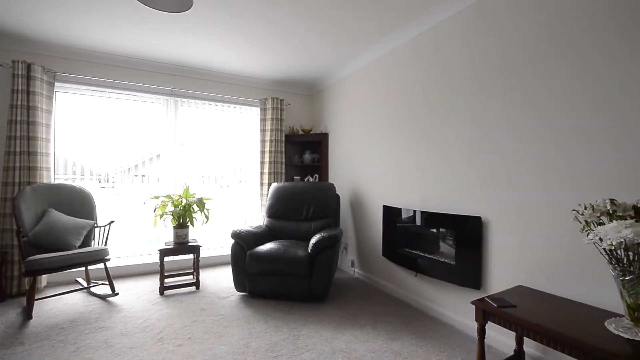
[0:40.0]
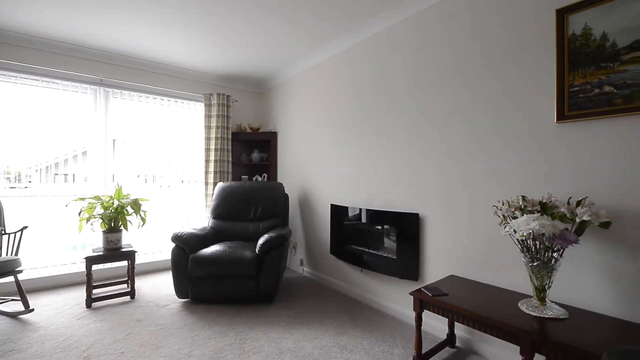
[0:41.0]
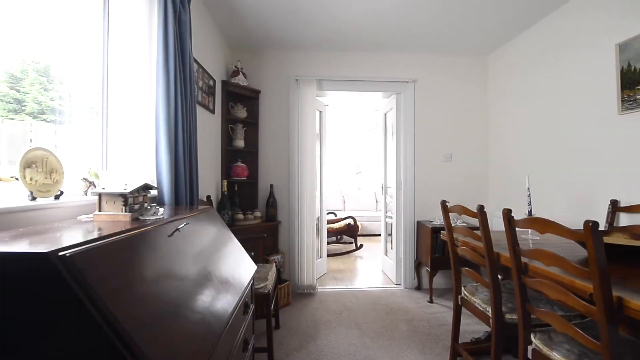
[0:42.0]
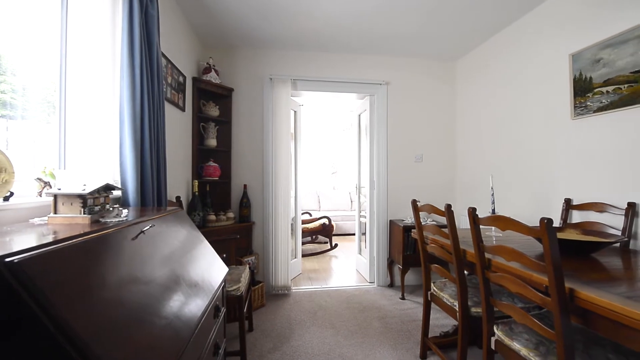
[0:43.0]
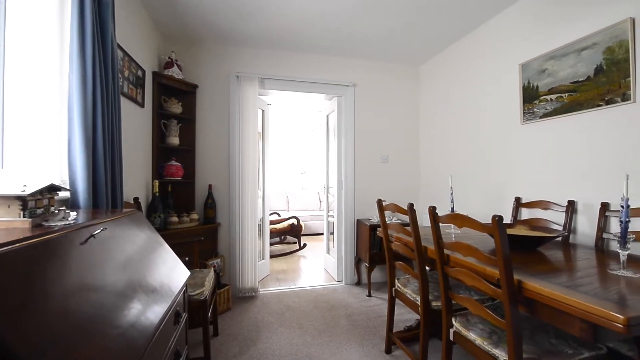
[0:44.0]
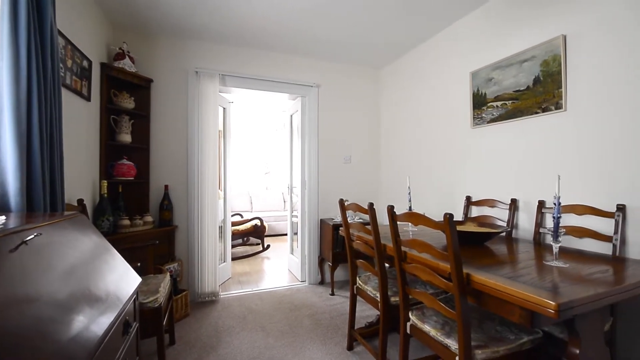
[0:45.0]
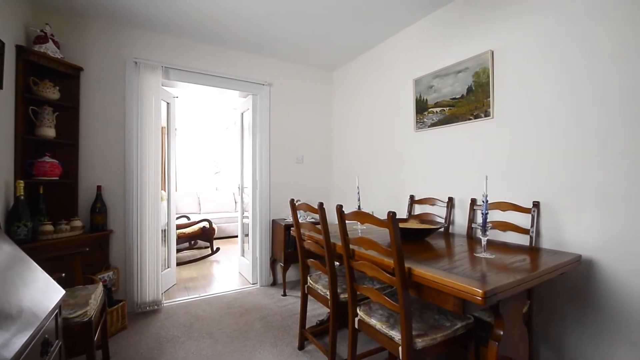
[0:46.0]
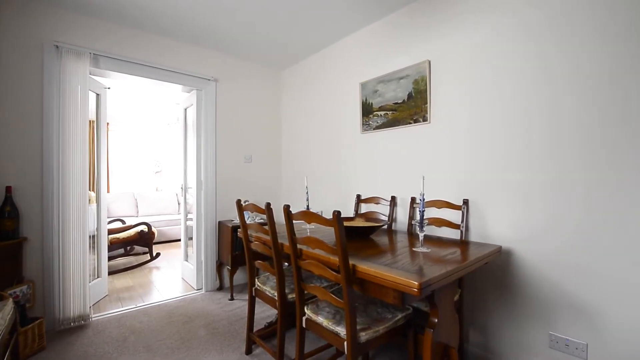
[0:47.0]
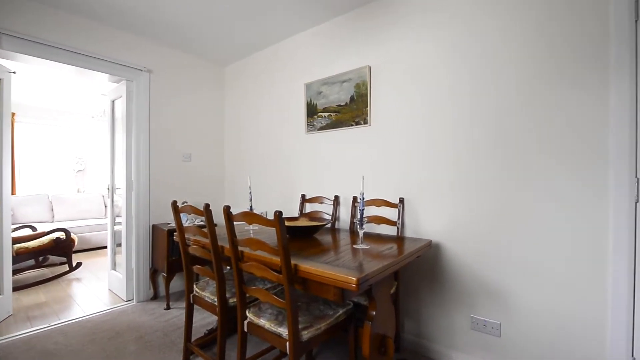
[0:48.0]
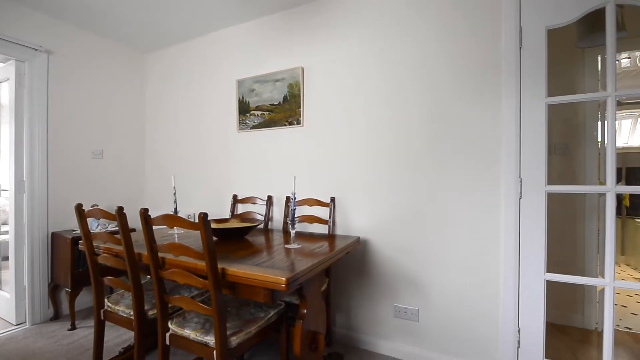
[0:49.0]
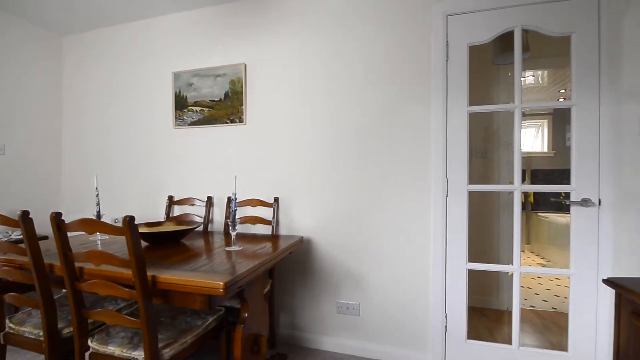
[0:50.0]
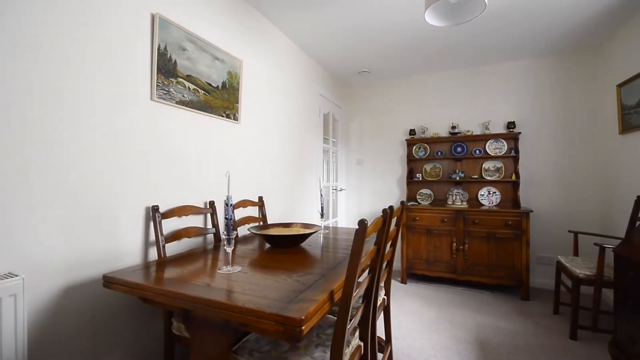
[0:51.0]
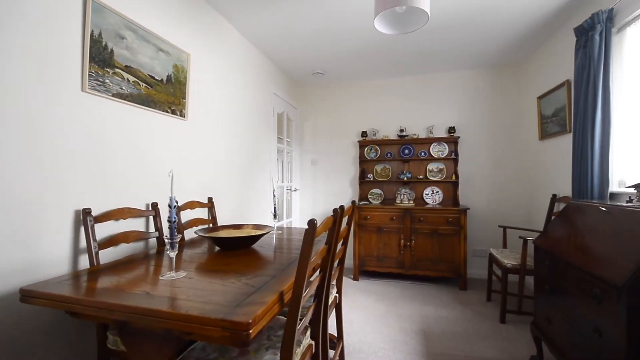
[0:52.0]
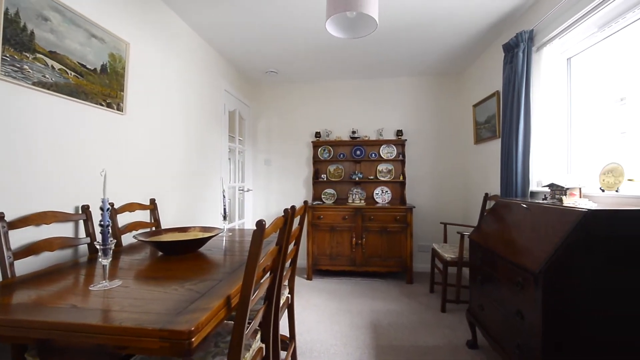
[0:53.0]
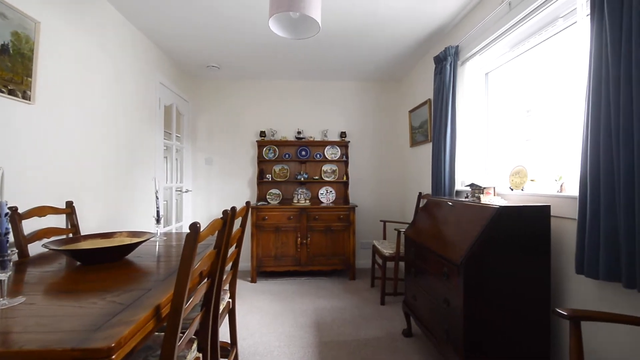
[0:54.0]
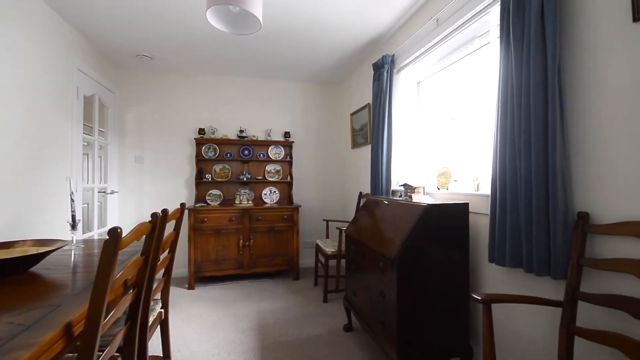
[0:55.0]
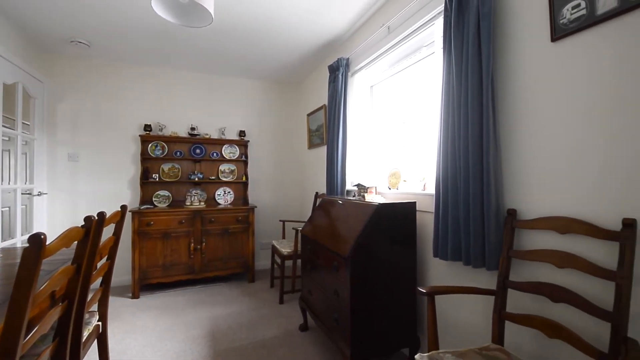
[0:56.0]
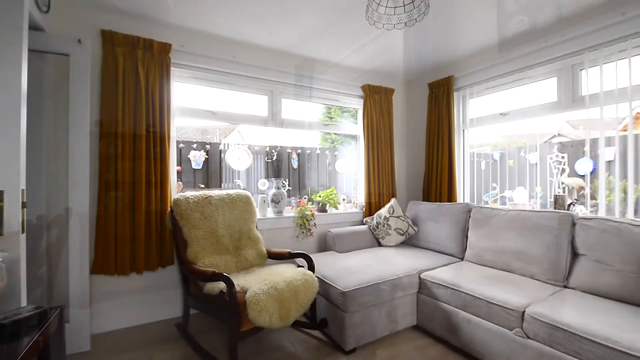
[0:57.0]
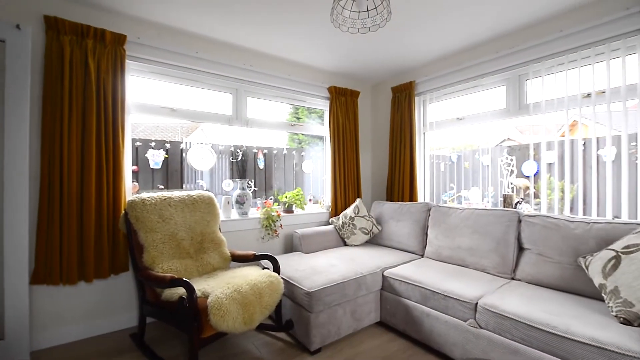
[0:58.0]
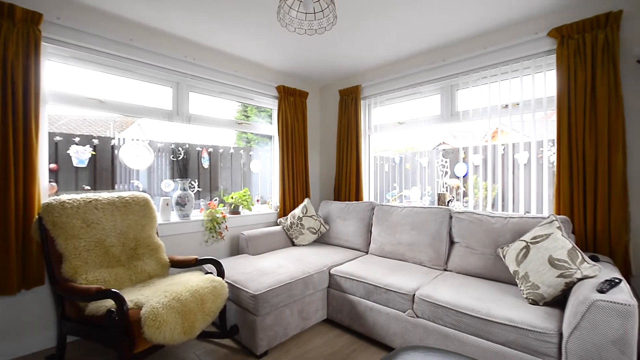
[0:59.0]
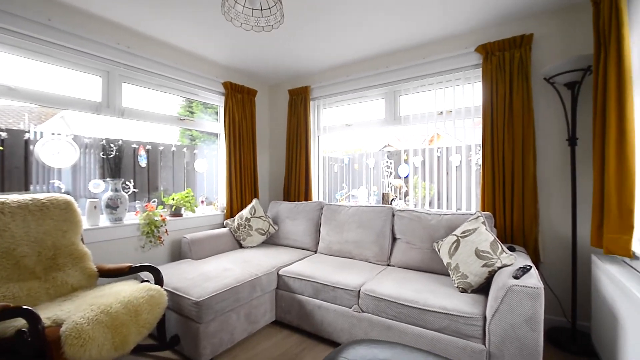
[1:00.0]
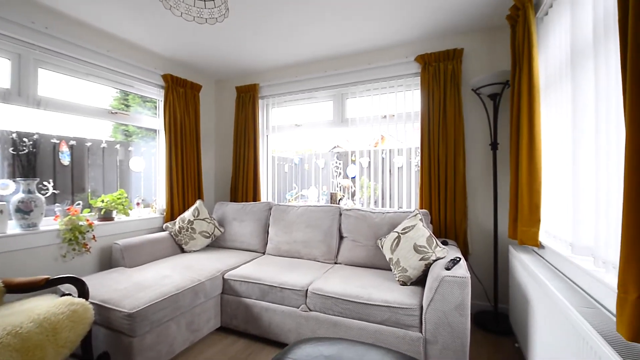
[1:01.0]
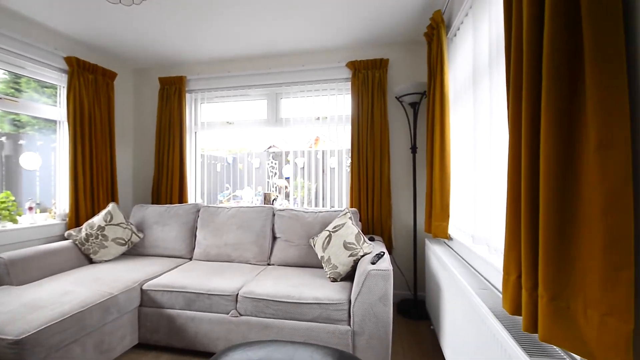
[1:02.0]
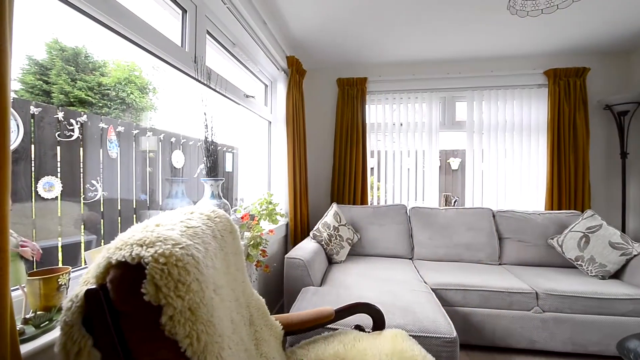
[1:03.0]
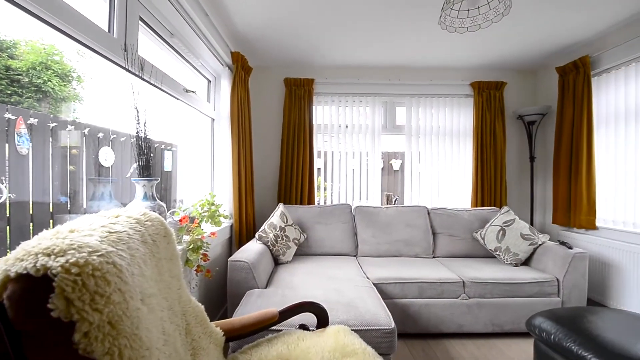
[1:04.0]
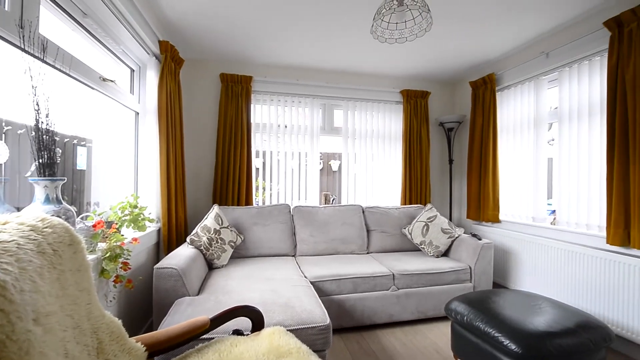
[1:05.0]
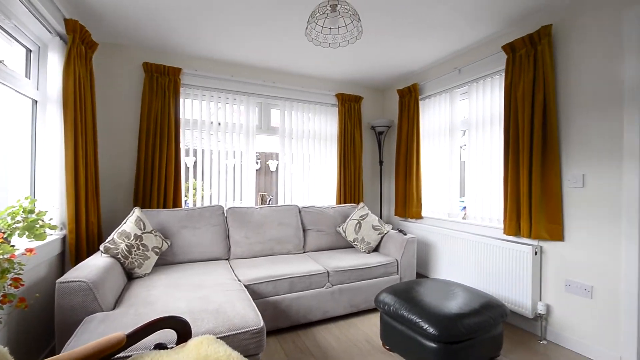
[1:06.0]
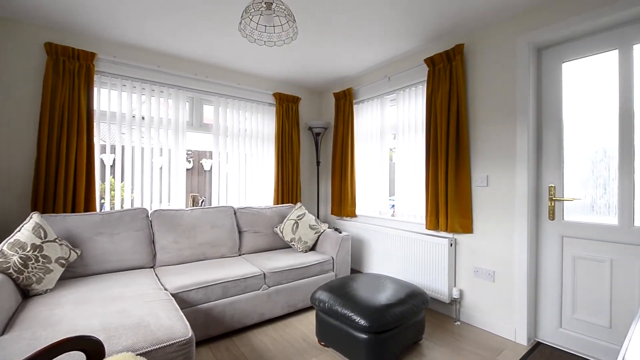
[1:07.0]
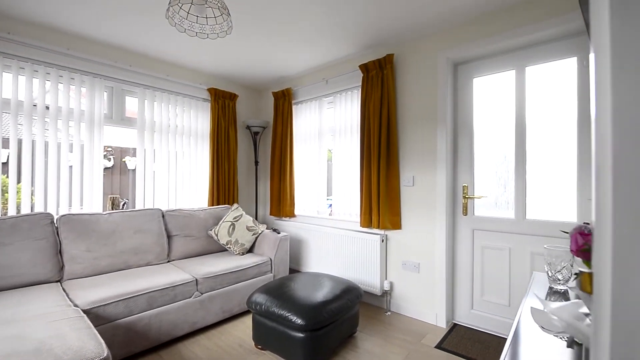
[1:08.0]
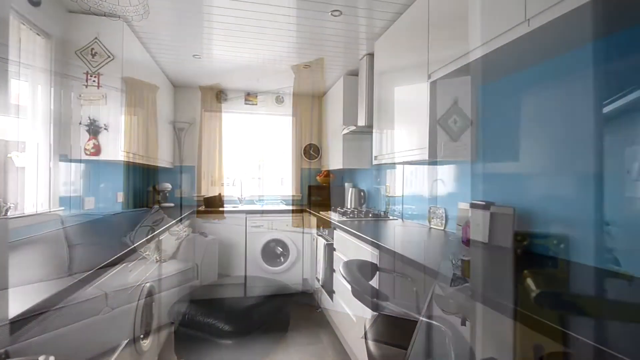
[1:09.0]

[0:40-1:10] The pan around the living room continues, with the vase of flowers moving in on the right-hand side. A mix transition leads to a dining room, which has some kind of cabinet on the left-hand side by a window, a plate on a stand in the window, and a small model of a Swiss chalet on top of the cabinet. Another corner cabinet displays some ceramics, and on the right-hand side is a reproduction wood-effect dining table with four chairs. A small chest or cabinet on legs is in the distance, and a painting on the wall looks like countryside or a river and a bridge. In the distance, the living room with the rocking chair is visible. The shot pans to the right, revealing another white glazed door, then mixes to a reverse shot of the same room, showing another Welsh dresser in the background and a formal chair. The curtains in this room are blue, and there is a white light fitting on the ceiling. The video then transitions to another sitting room with grey sofas, a wooden chair with what looks like a sheepskin thrown over it, mustard-coloured curtains, vertical blinds in one of the windows, and a small uplighting lamp that shines up at the ceiling. Another angle of the same room shows that the sofa basically fills the width of the room, along with another white radiator, a black pouf, and a door that looks like it leads outside. The video then transitions to what is apparently a kitchen.